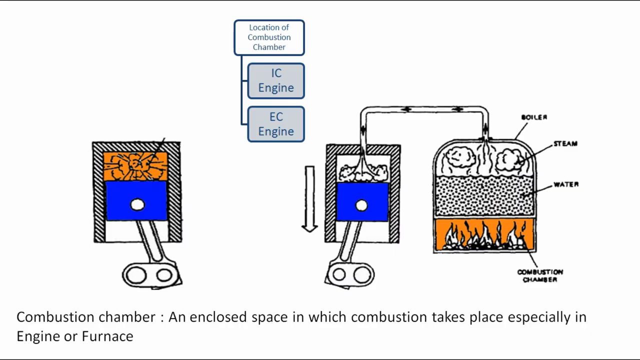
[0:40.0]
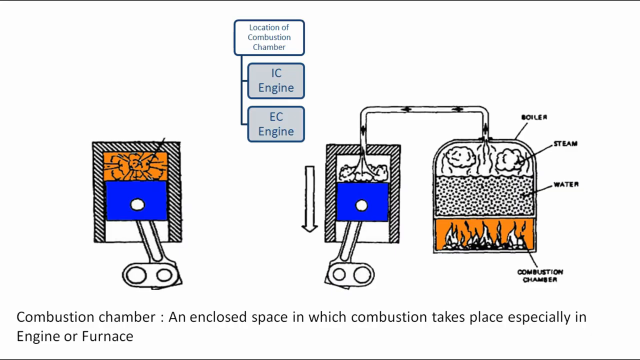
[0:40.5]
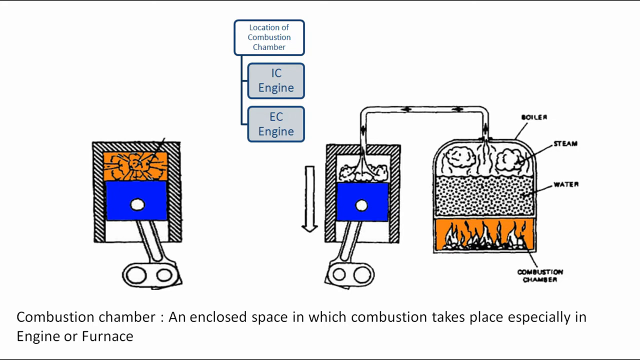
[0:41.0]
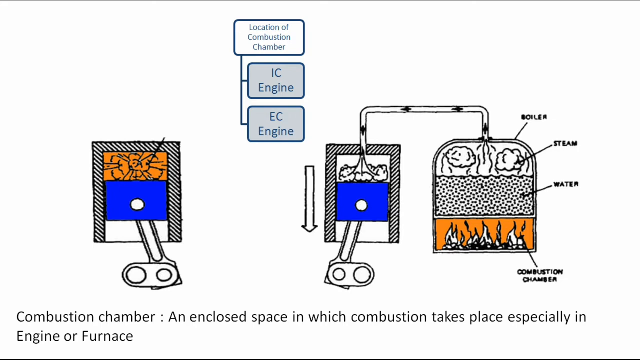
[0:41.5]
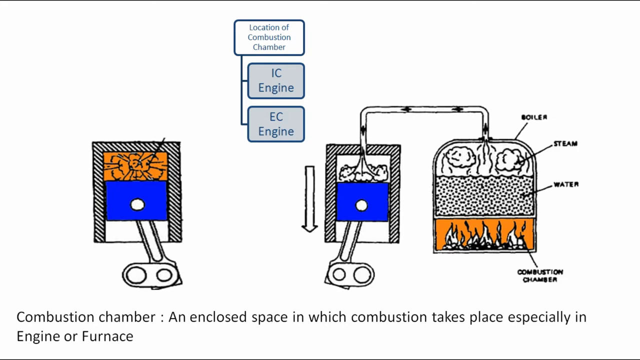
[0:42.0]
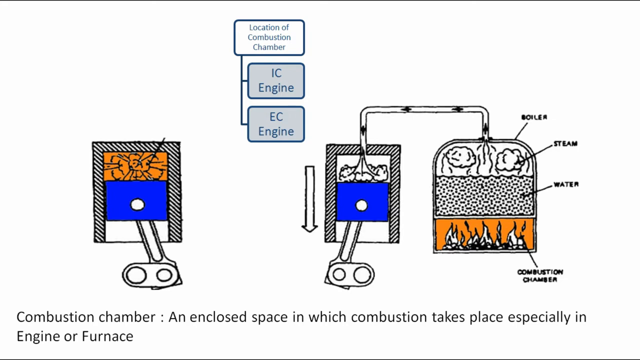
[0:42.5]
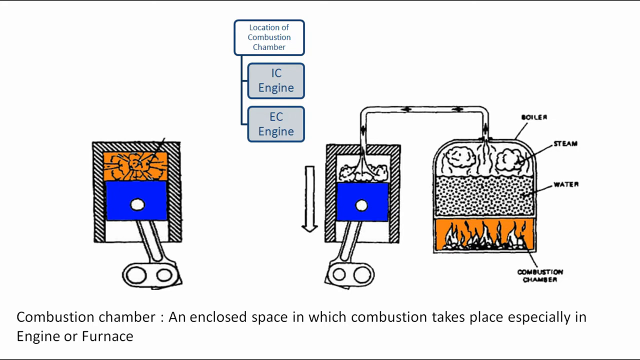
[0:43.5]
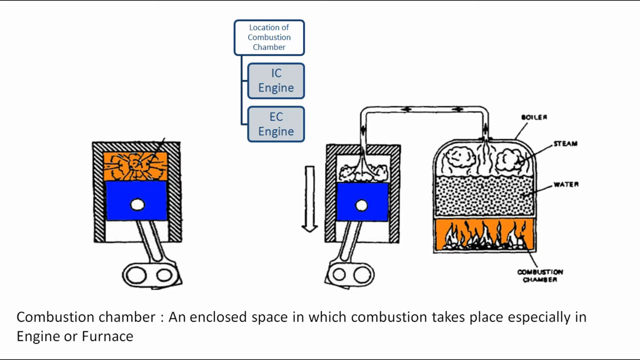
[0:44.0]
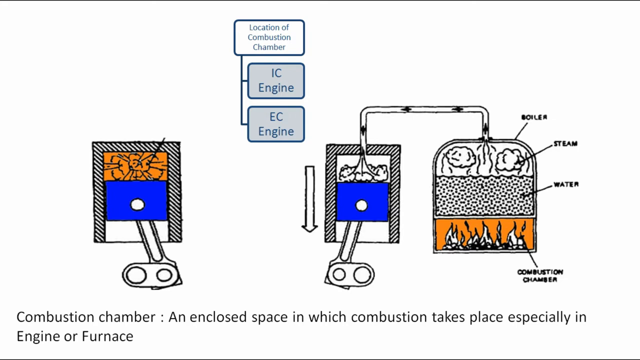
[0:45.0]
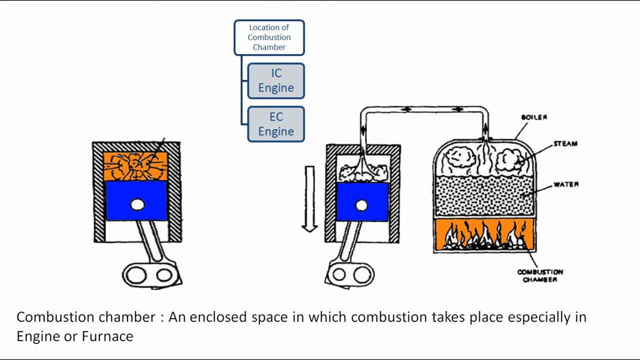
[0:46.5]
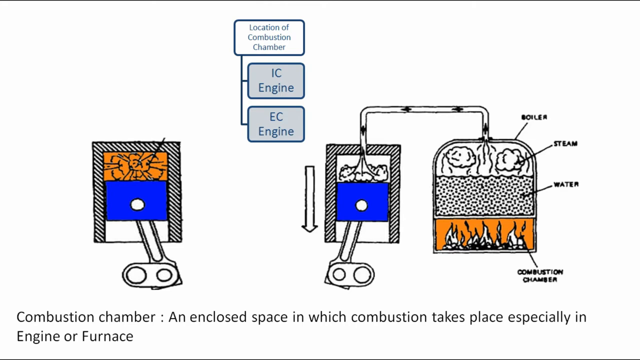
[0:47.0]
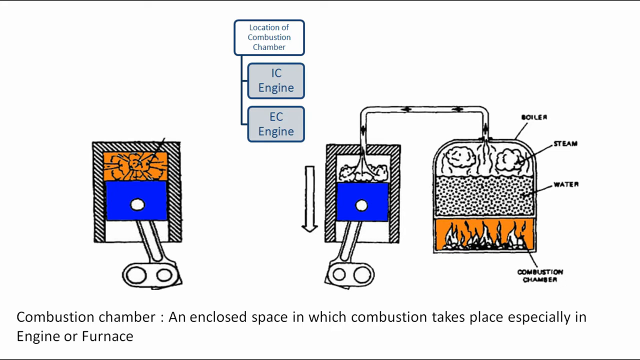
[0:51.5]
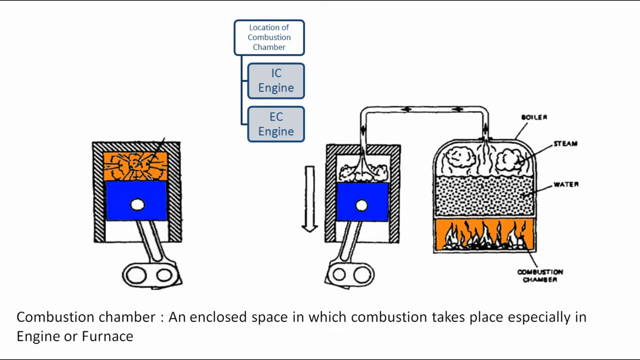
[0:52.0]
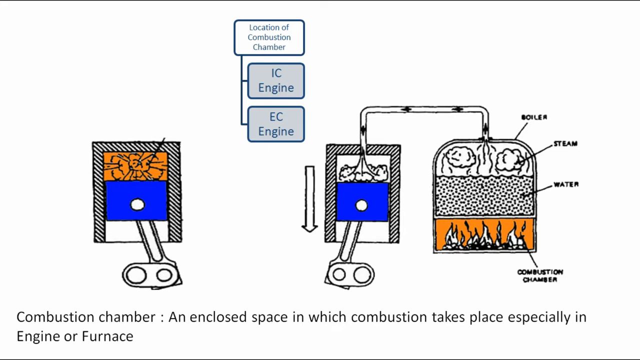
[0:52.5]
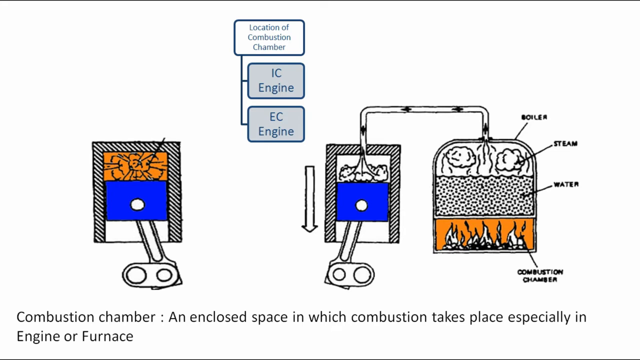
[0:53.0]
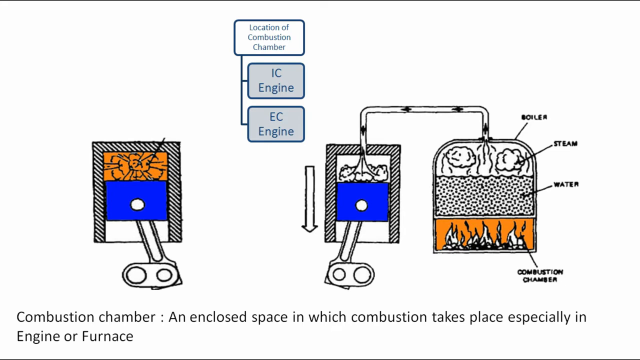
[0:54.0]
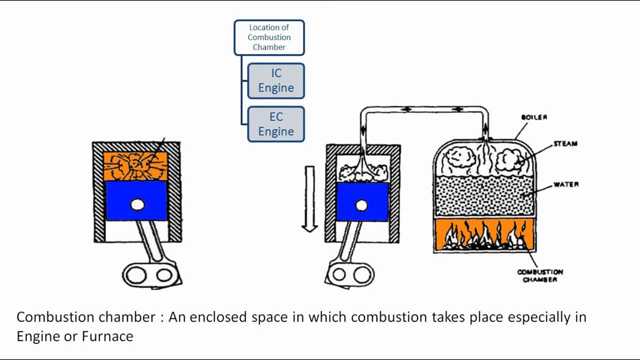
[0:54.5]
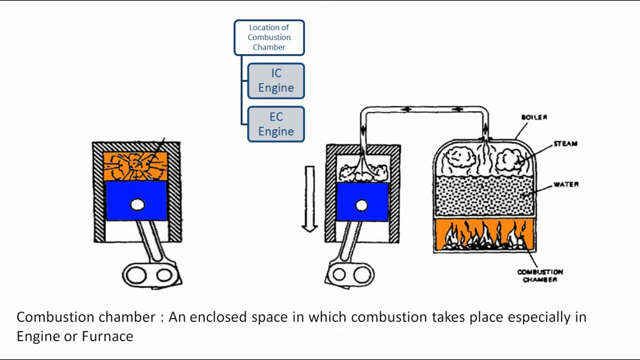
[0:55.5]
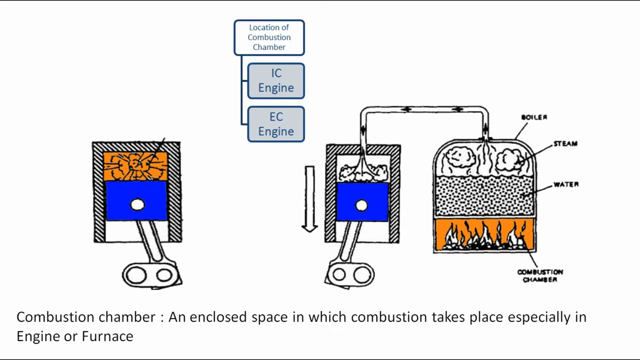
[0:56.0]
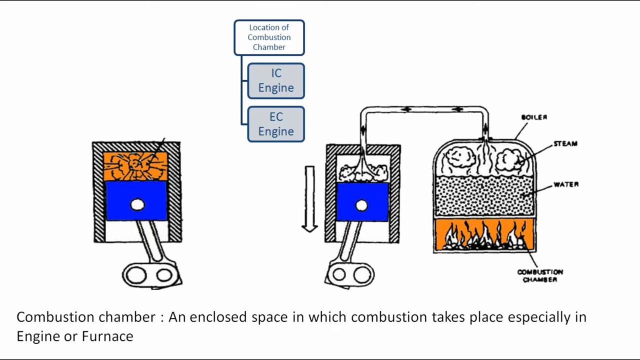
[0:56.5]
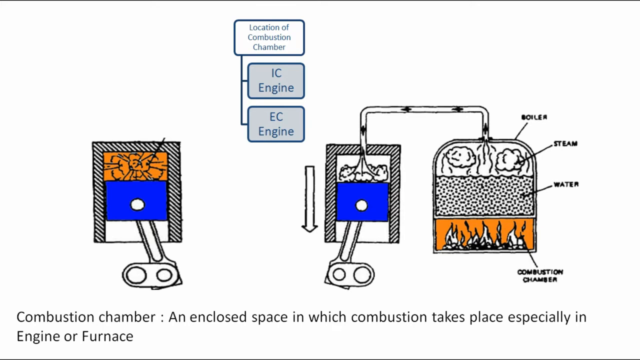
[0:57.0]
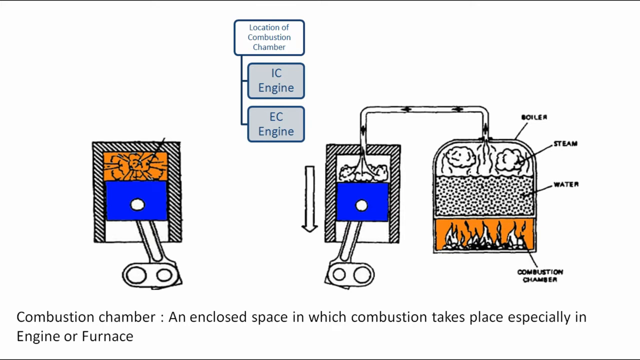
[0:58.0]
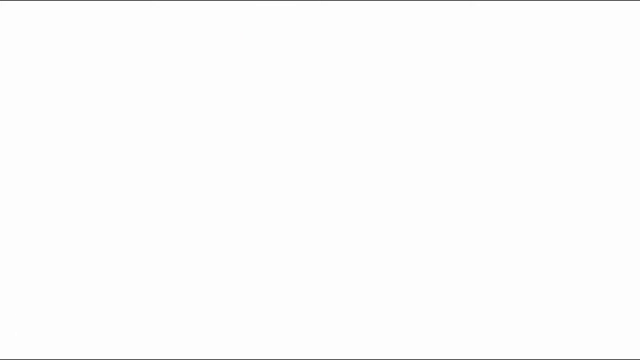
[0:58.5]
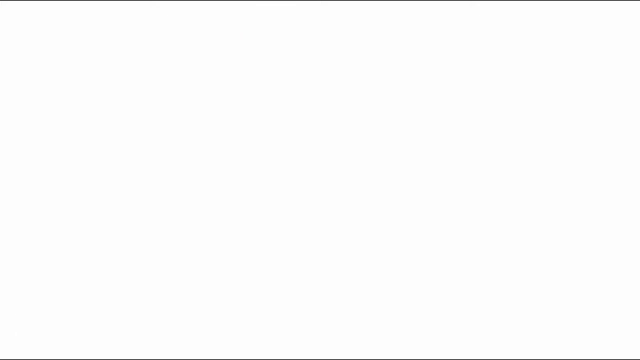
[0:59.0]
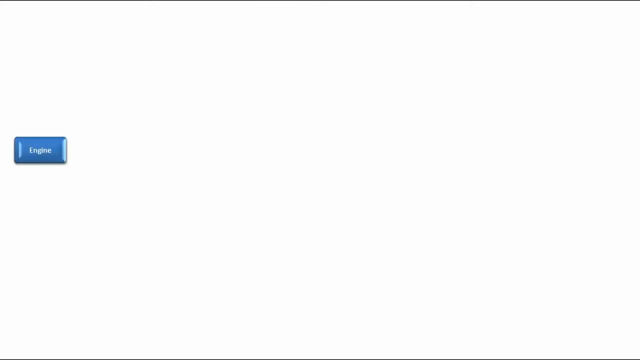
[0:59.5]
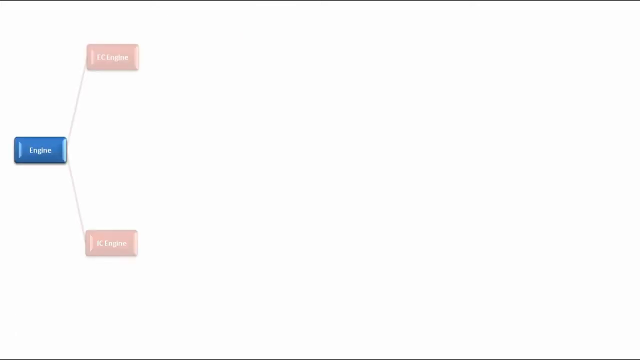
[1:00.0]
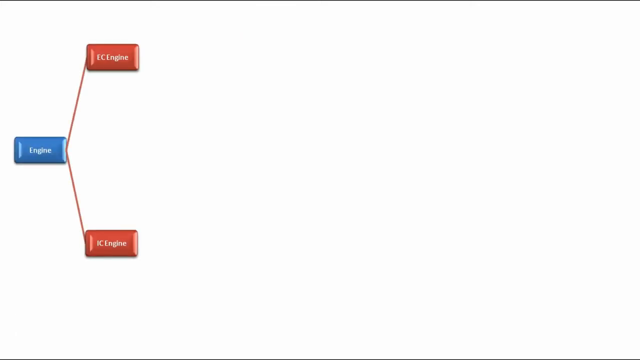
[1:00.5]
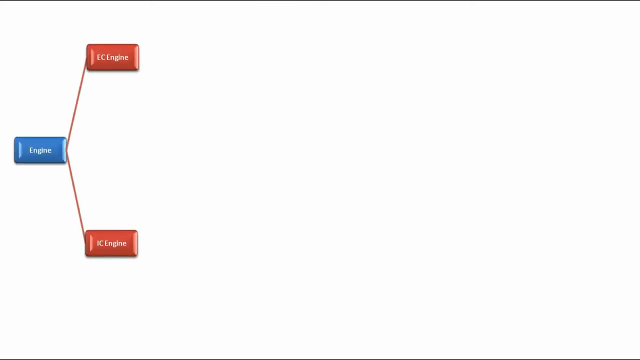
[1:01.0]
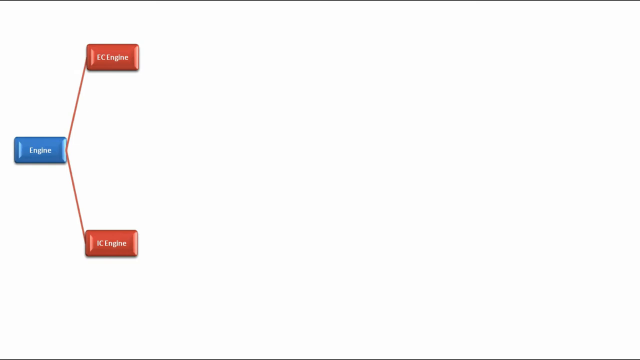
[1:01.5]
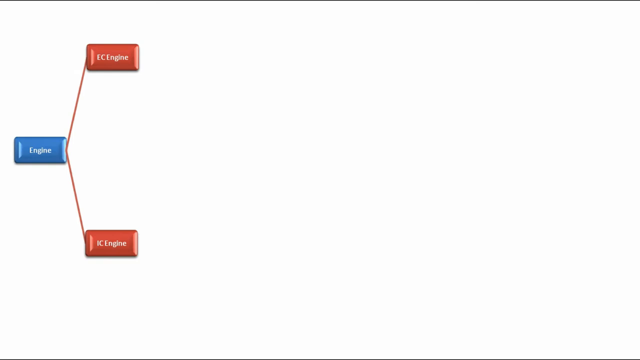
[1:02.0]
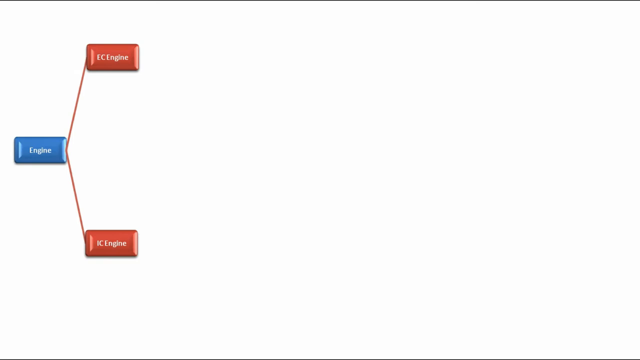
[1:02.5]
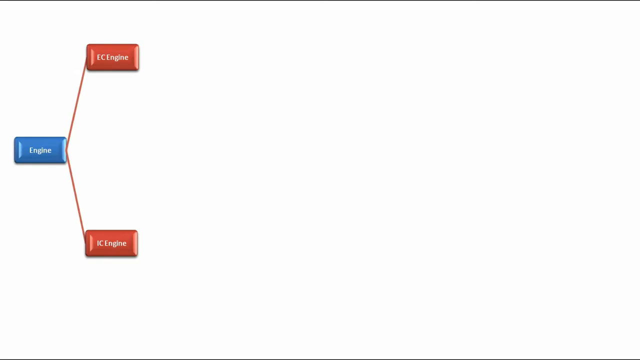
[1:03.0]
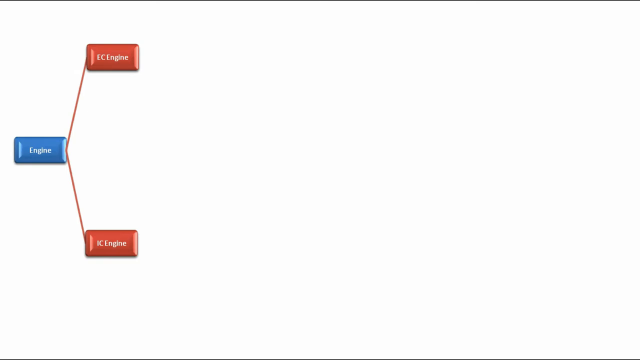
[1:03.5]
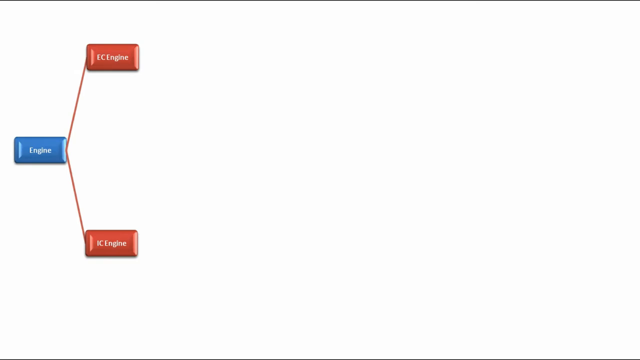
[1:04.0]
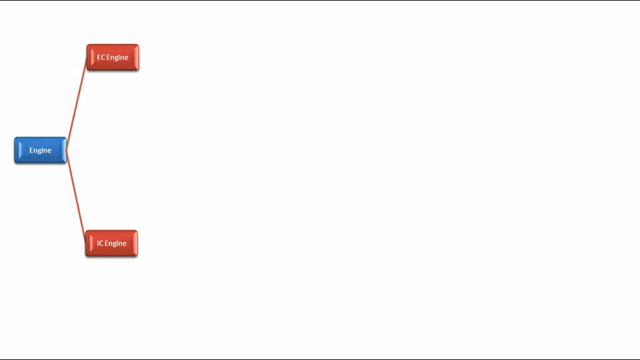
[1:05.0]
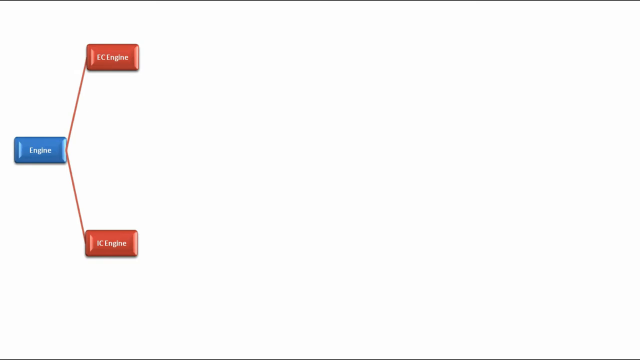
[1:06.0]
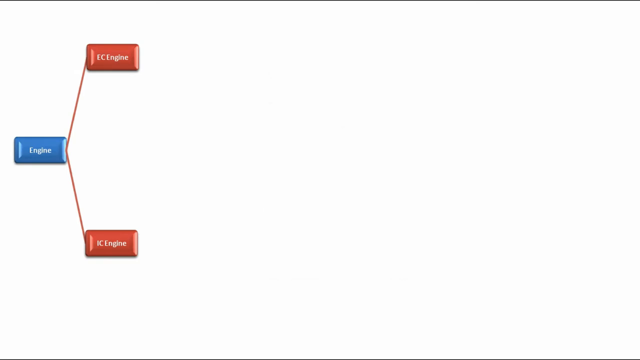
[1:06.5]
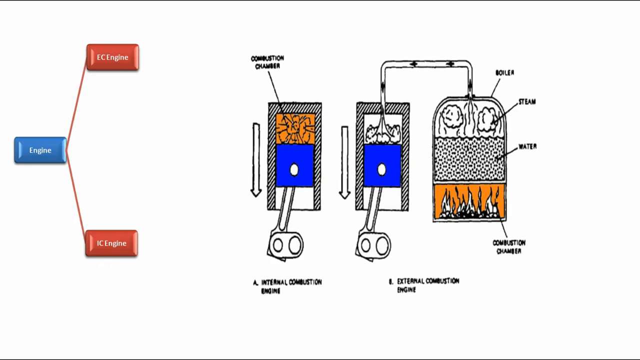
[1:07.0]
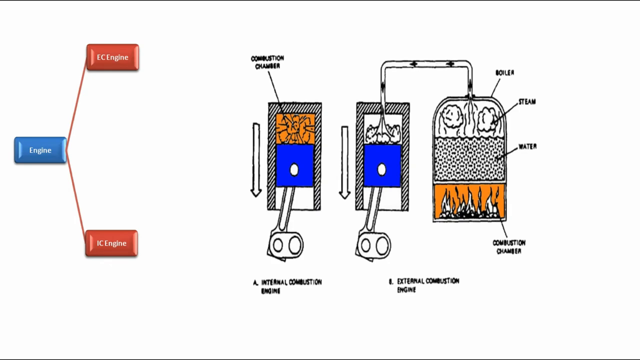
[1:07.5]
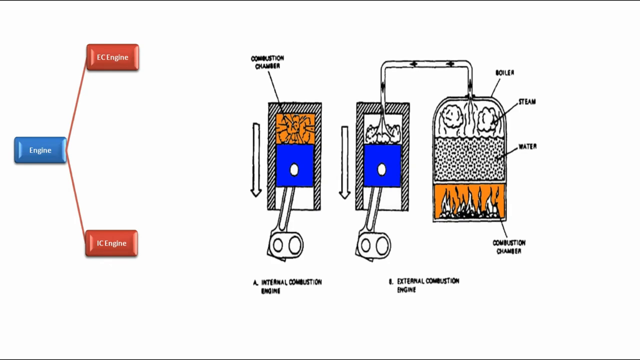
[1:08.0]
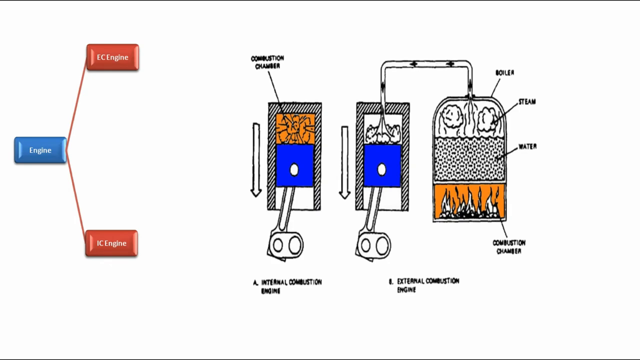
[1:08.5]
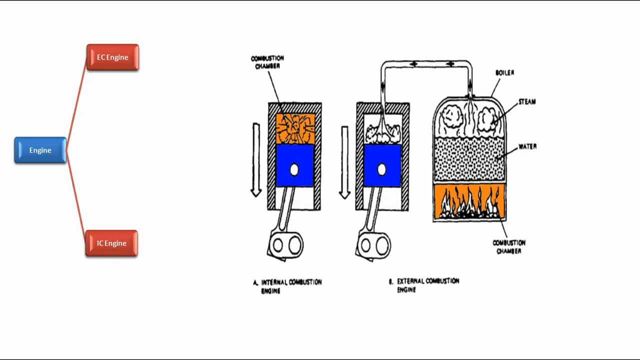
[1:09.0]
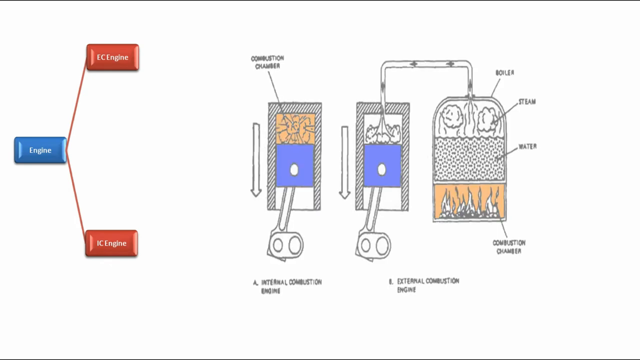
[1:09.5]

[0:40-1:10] The video appears to be a PowerPoint presentation. The slide shows two pictures with a chart at the top reading "location of combustion chamber," with two lines leading downward to "IC engine" and "EC engine." In the middle are two diagrams. The left one looks like a crankshaft arm connected to a blue rectangle, with an orange combustion area above it. The right picture has two chambers. The chamber on the right is labeled "combustion chamber" at the bottom, which is orange and has fire, then water in the middle and labeled steam at the top, and the whole thing is labeled "boiler." A pipe leads upward and to the left into the other chamber, putting steam into this chamber, which has the crankshaft arm and a downward-pointing arrow. At the bottom, black text reads "combustion chamber and in closed space in which combustion takes place, especially in engine or furnace." The video then transitions to a slide that is white at first. A blue rectangle appears on the left side with white text reading "engine," and two red lines branch off toward the top and the bottom. The top leads to a red rectangle with white text reading "EC engine," and the bottom to a red rectangle with white text reading "IC engine." On the right, the same diagram as the previous slide appears. The left picture shows only the combustion chamber, an internal combustion engine with one chamber, combustion at the top and then a crankshaft arm. Underneath the right picture it says "B, external combustion engine"; it appears to have two chambers, the right one containing the combustion, water and steam and called the boiler, with a pipe leading to the left compartment where steam is blowing inside, and another downward arrow. The external combustion engine apparently has two compartments and the internal combustion engine one. The picture then fades out and four more rectangles appear.